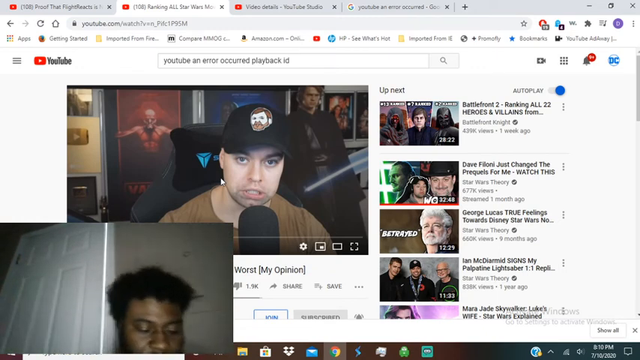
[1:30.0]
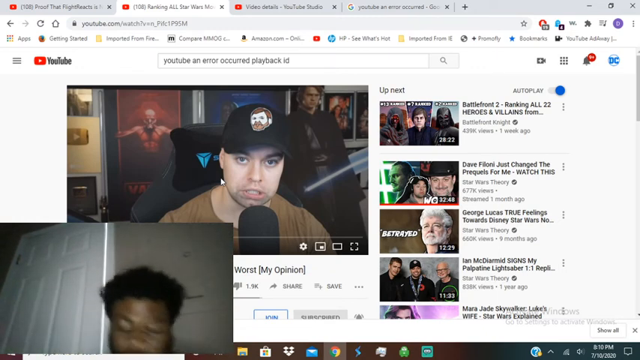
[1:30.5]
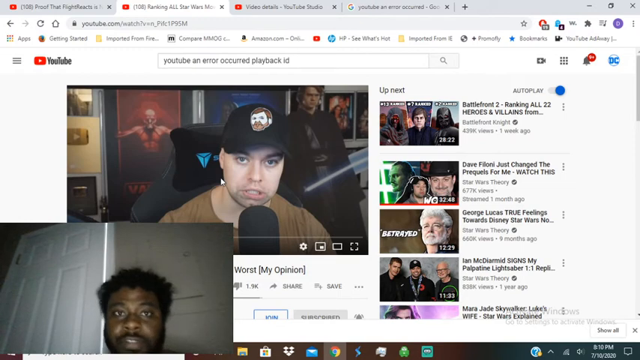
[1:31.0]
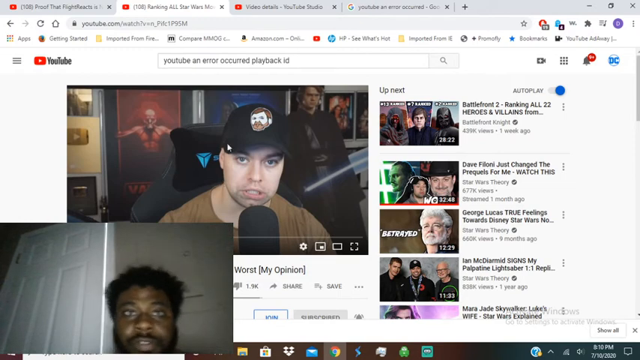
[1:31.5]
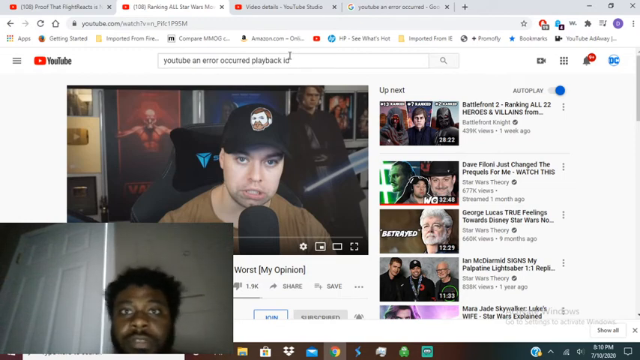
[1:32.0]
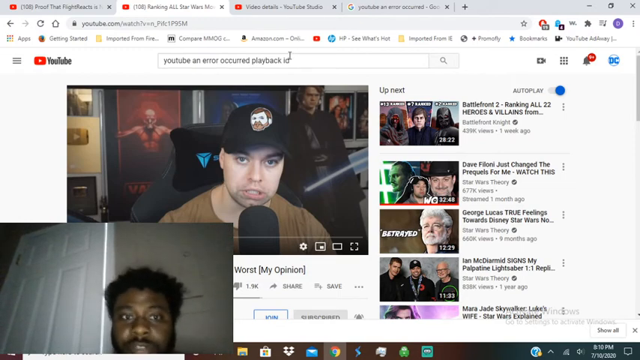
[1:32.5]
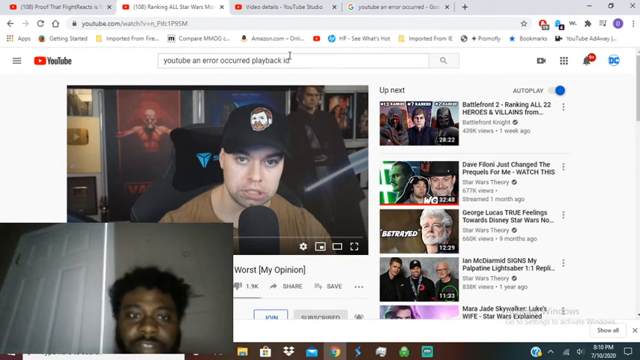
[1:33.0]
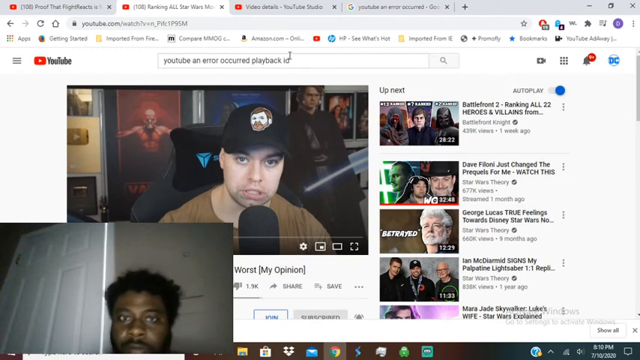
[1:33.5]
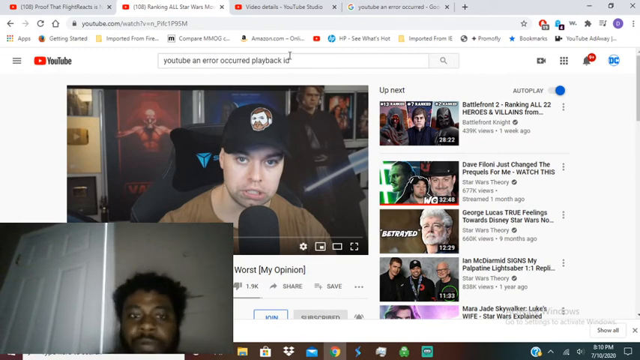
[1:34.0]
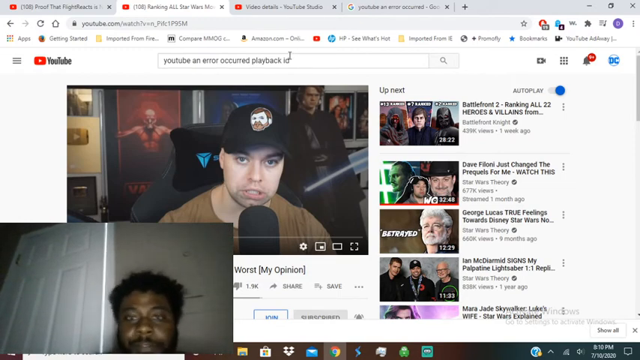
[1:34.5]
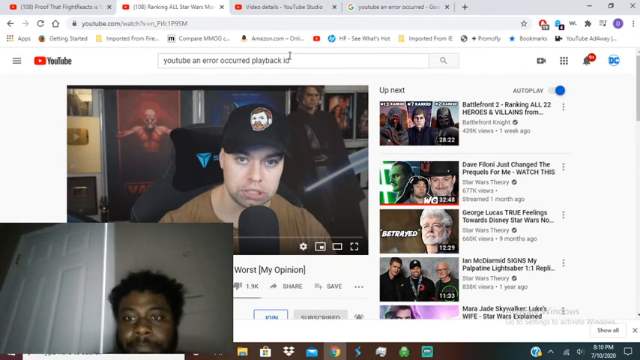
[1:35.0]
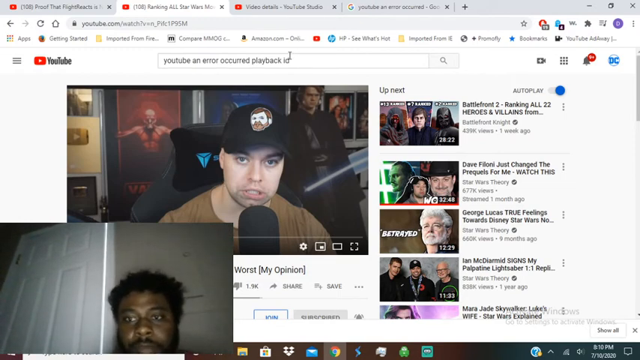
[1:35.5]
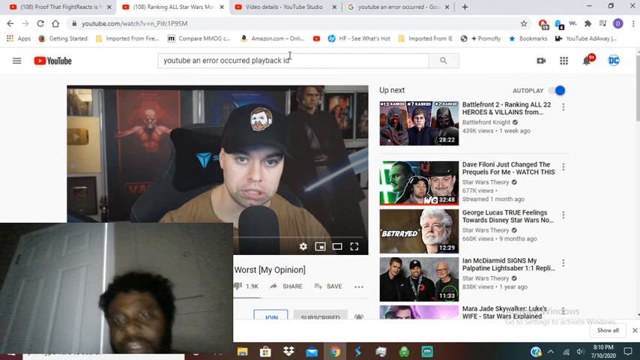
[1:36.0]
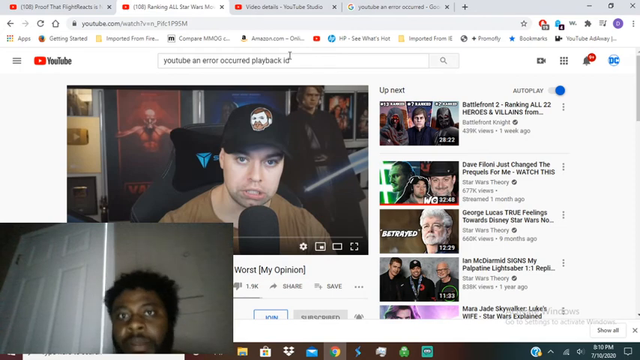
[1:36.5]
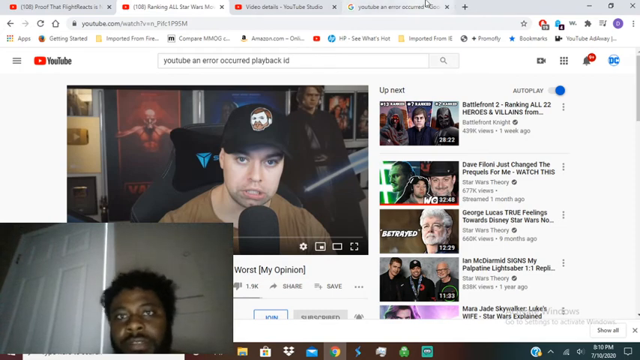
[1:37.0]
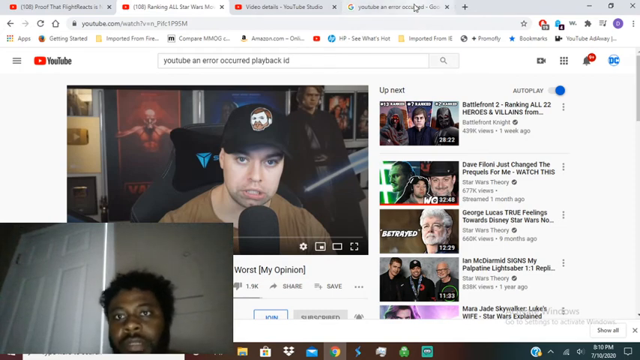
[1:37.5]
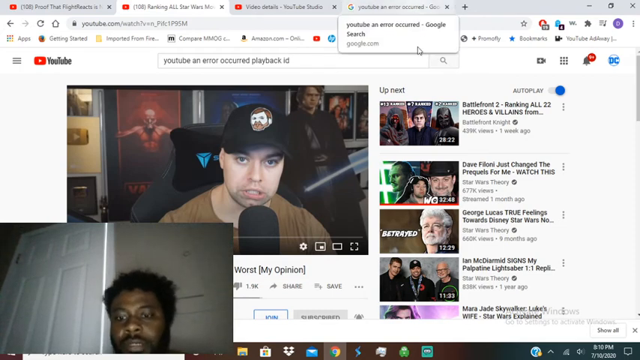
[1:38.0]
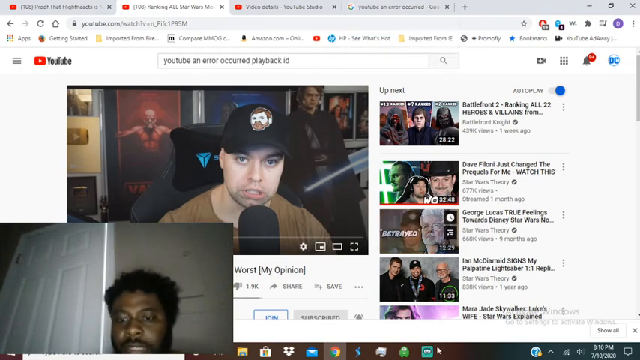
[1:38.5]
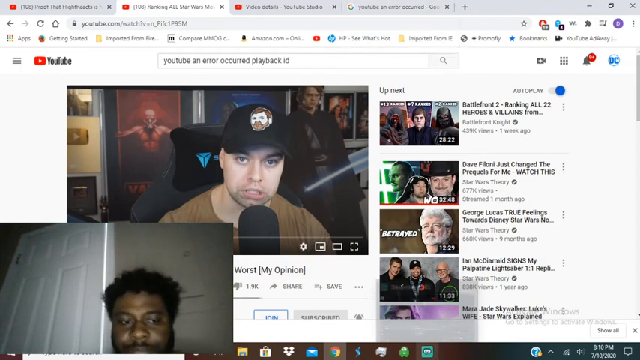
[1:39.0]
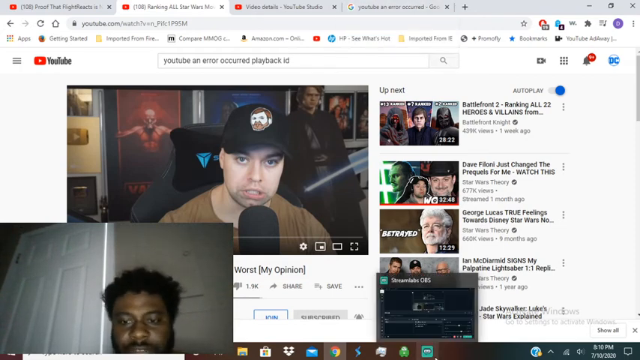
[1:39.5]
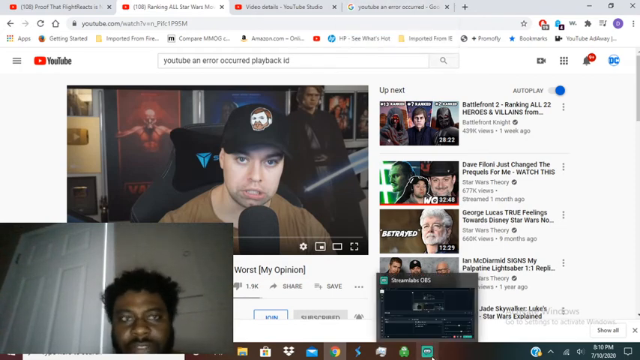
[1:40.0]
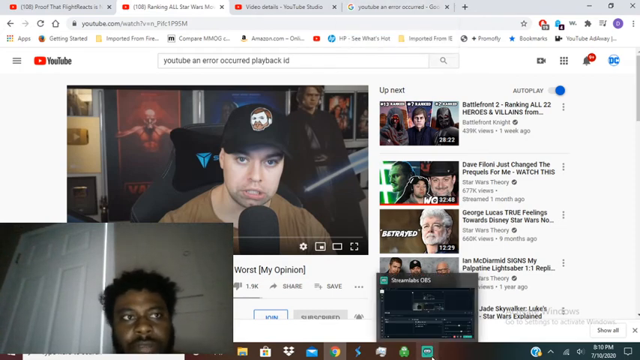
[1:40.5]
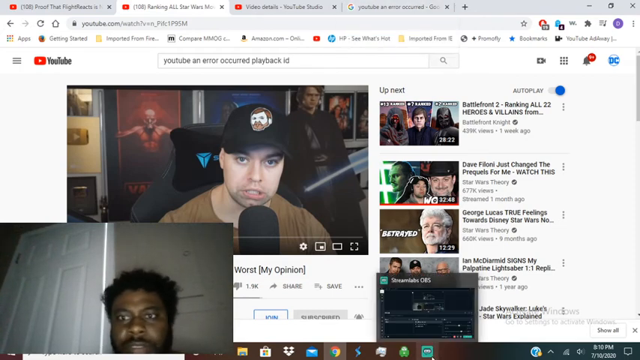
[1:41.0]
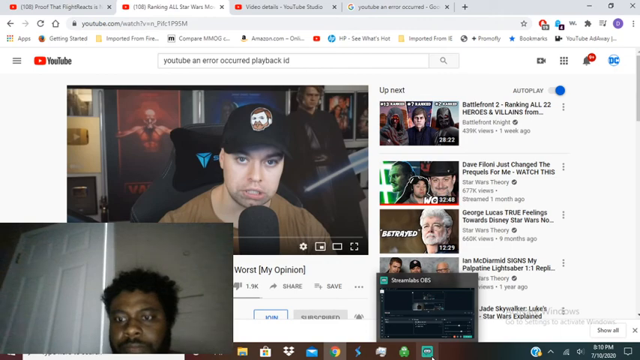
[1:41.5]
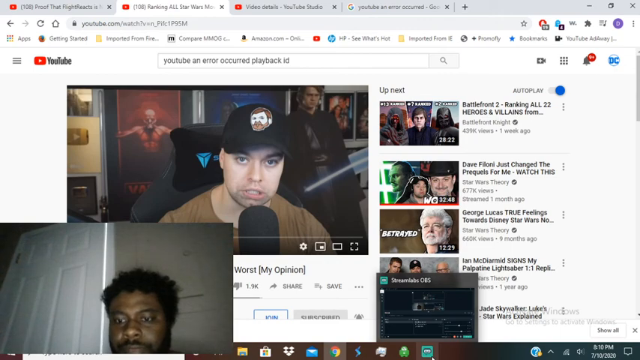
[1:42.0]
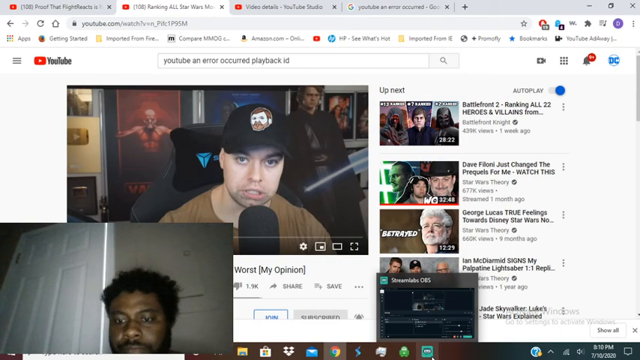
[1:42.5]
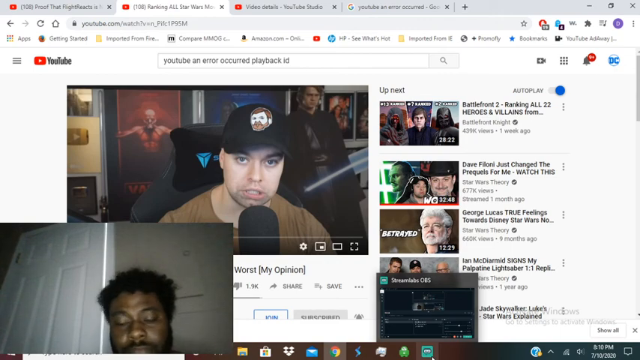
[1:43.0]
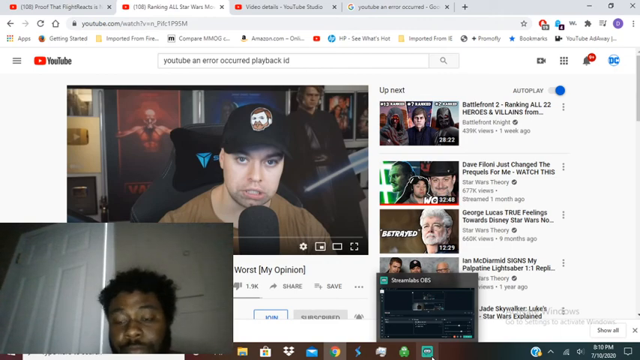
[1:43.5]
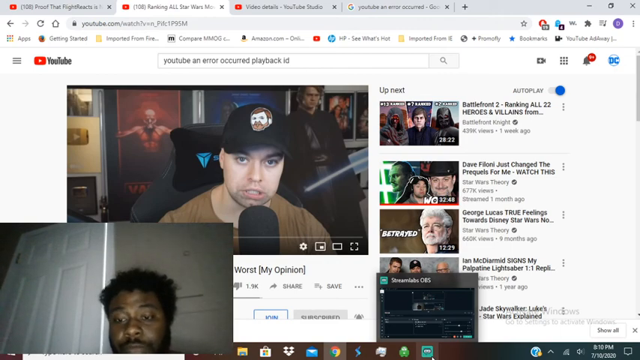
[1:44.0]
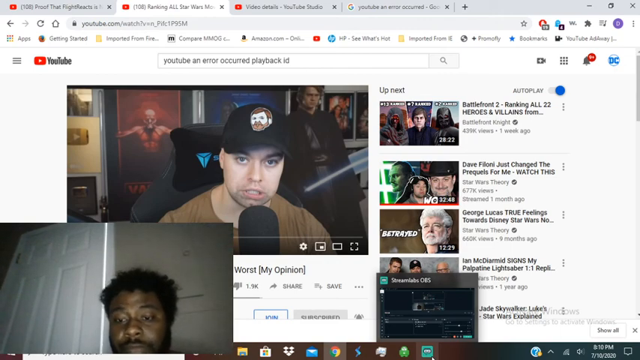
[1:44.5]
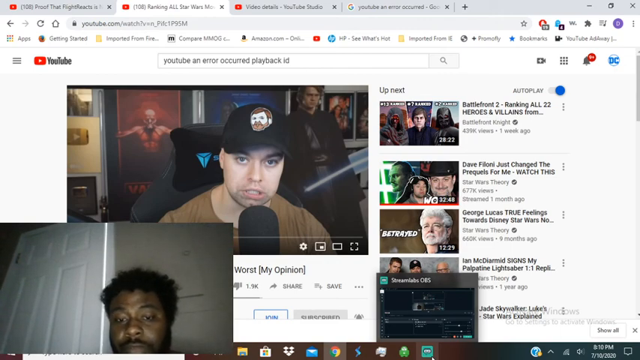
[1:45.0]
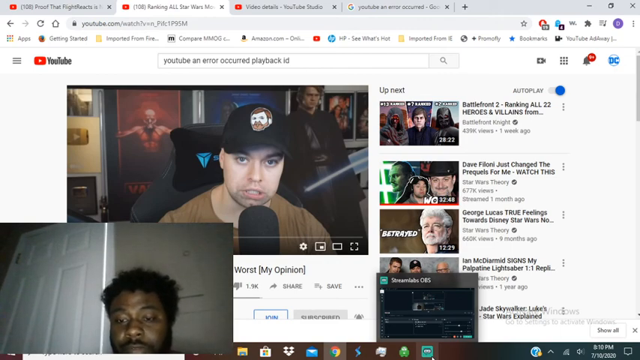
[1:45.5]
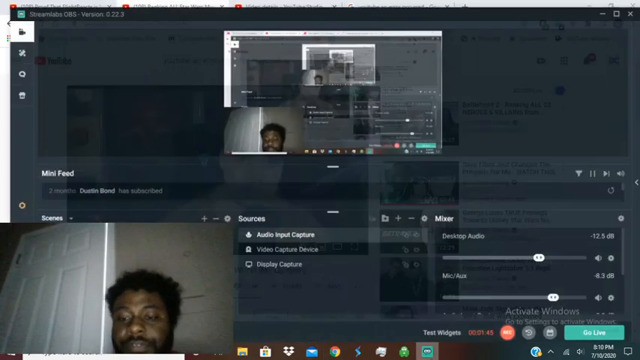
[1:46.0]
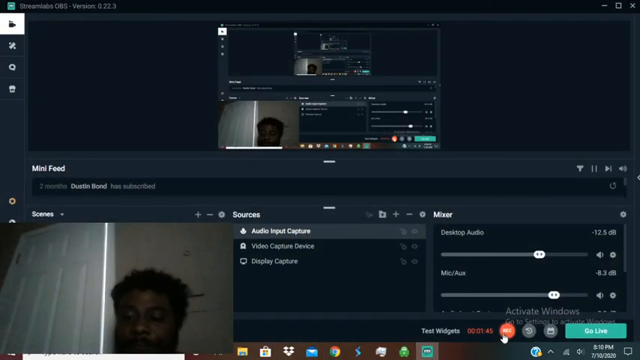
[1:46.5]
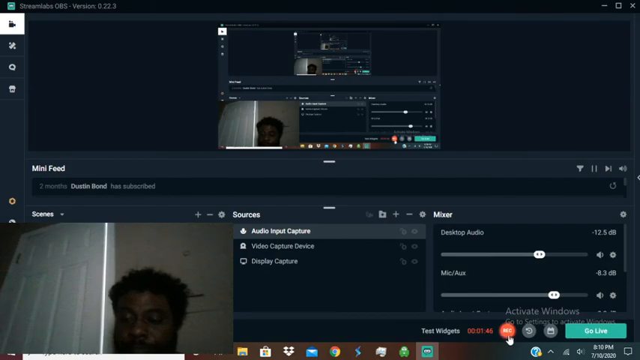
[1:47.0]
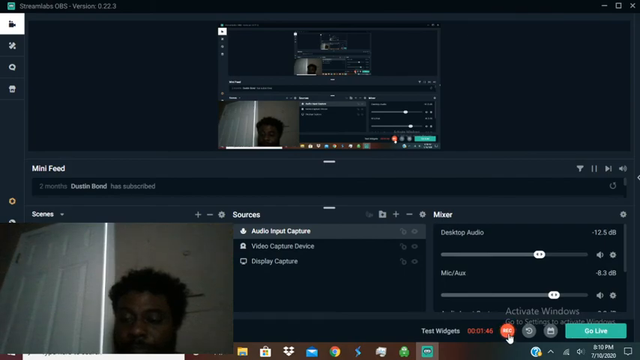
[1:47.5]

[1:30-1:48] A PC monitor shows four open tabs: three YouTube tabs and one Google Search tab. The current tab shows how-to or fix-it videos for YouTube playback errors. At the bottom left of the screen is a live video of a man who appears to be the person whose monitor is shown. He is searching YouTube videos and looks frustrated, his eyes showing confusion. He scratches his head, sort of waves his hand as if he is done with this, and talks toward his computer screen. He brings up videos and gets an error on a YouTube video as well. He opens a video of another man sitting in a gaming chair with movie franchise posters behind him. He moves his cursor up to the YouTube search box and then back into the body of the page. He brings up a tab from the toolbar at the bottom, which is Streamlabs OBS version 0.22.3, and places his cursor on the record button.